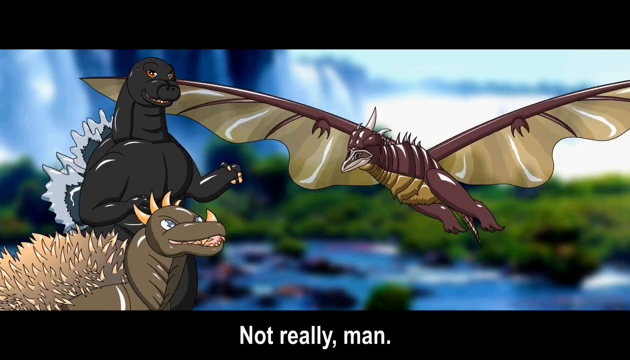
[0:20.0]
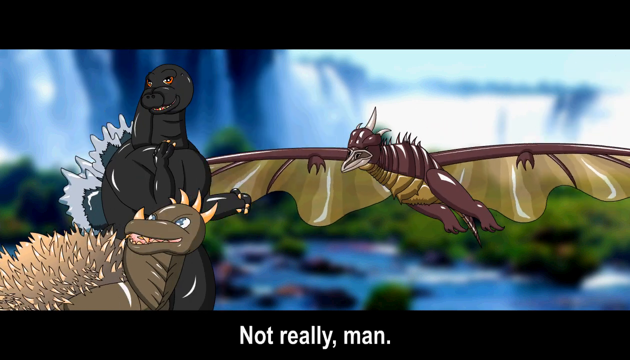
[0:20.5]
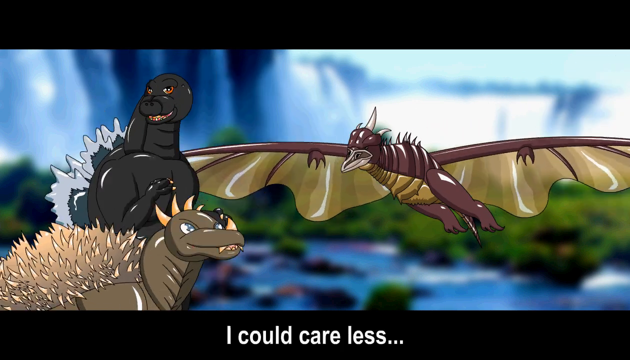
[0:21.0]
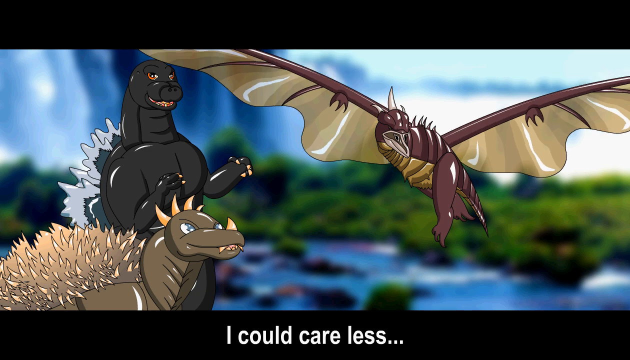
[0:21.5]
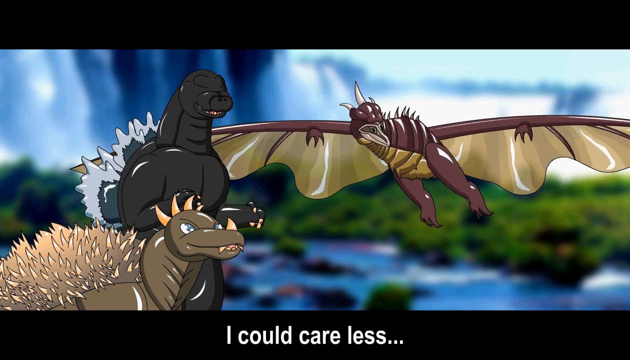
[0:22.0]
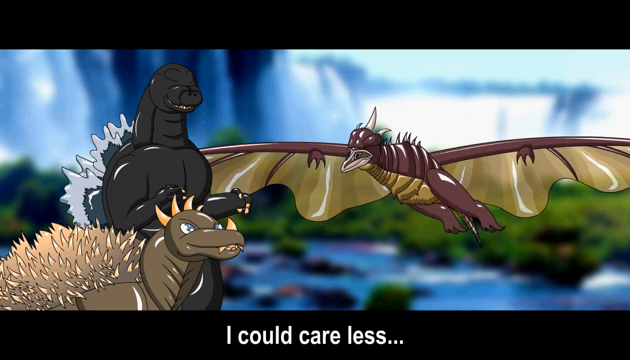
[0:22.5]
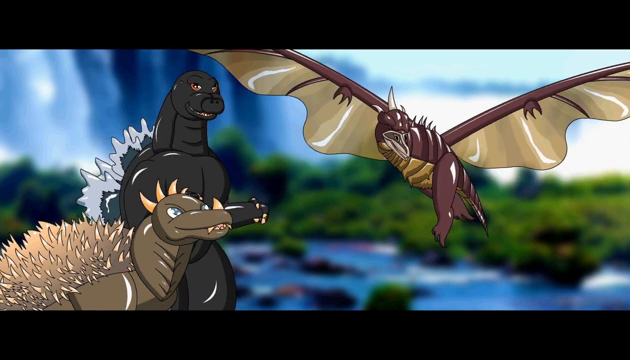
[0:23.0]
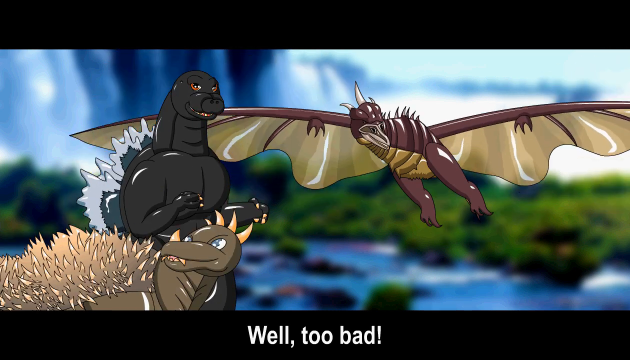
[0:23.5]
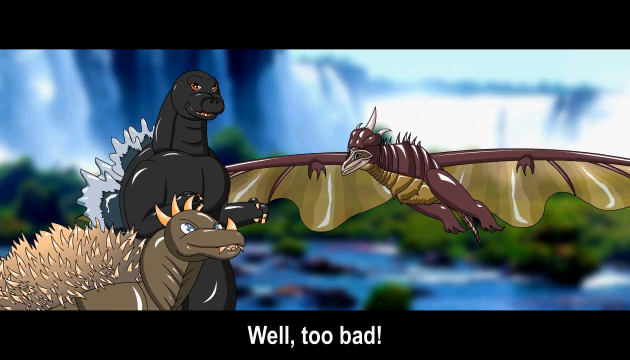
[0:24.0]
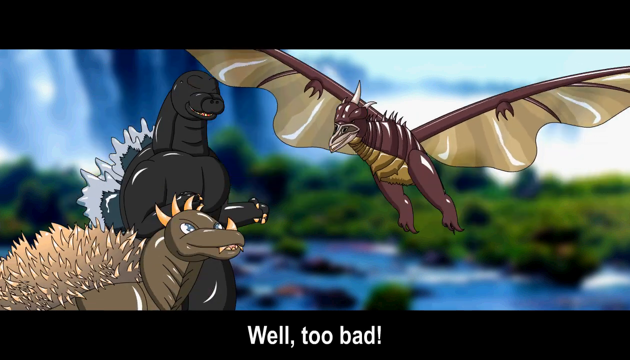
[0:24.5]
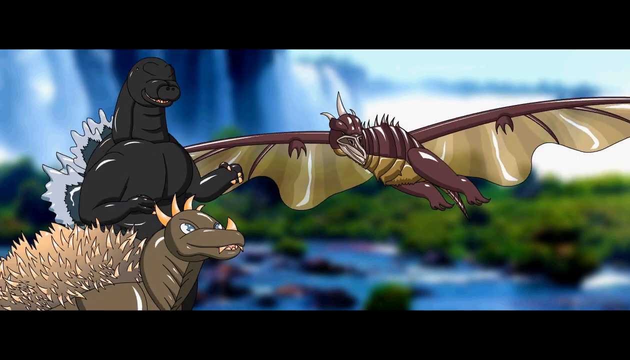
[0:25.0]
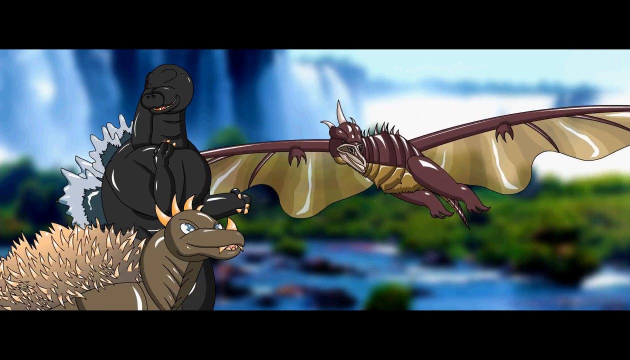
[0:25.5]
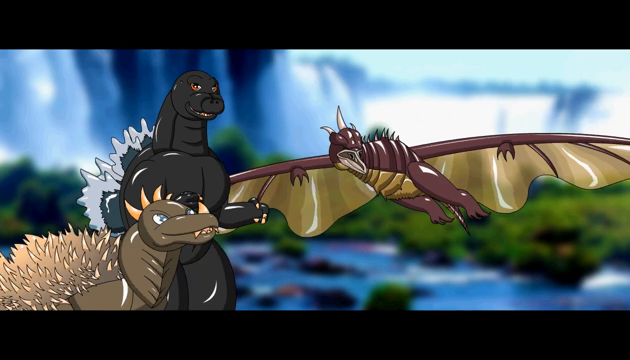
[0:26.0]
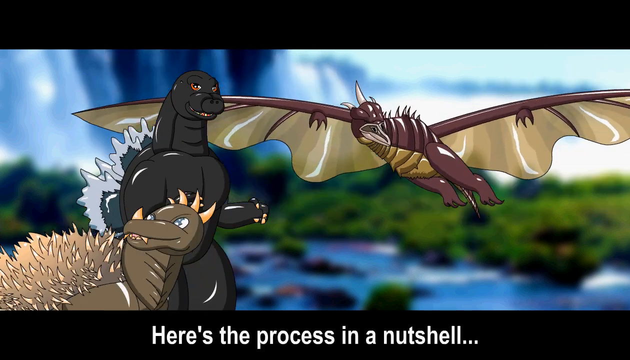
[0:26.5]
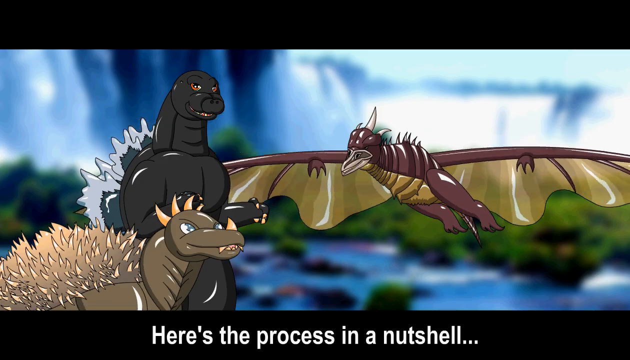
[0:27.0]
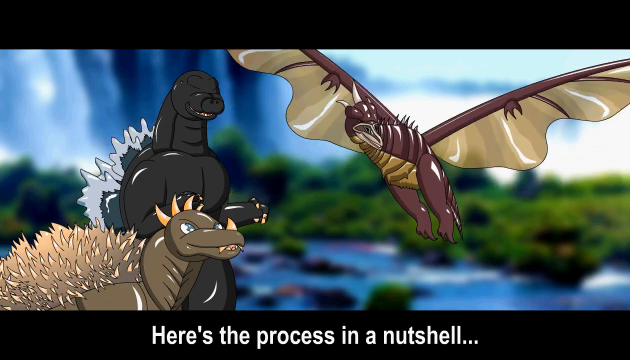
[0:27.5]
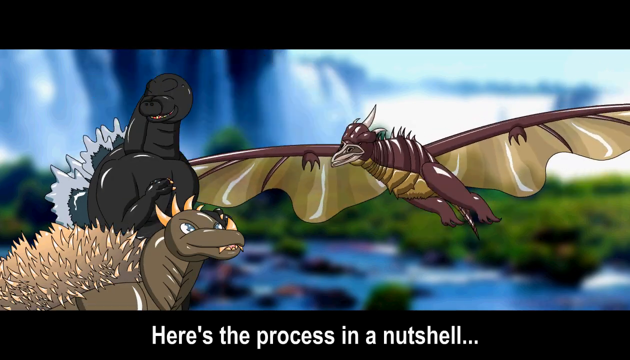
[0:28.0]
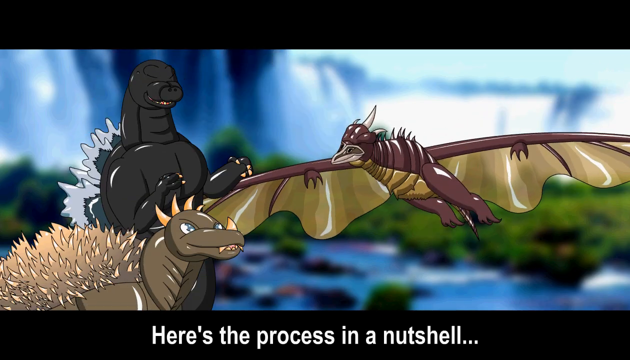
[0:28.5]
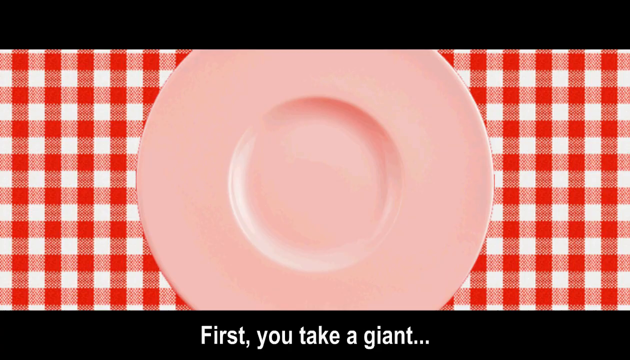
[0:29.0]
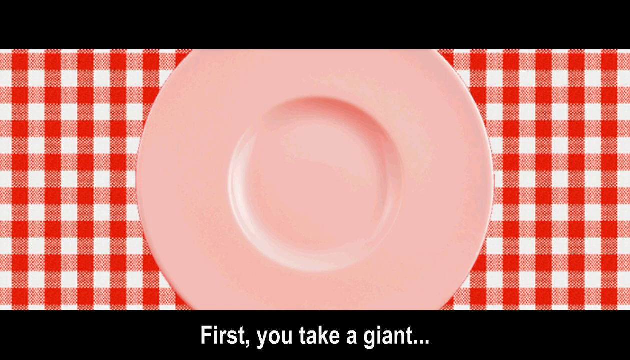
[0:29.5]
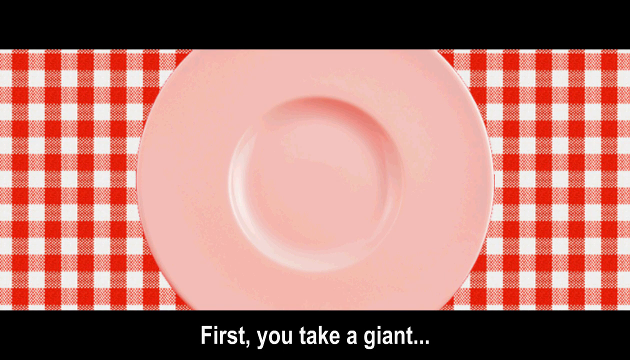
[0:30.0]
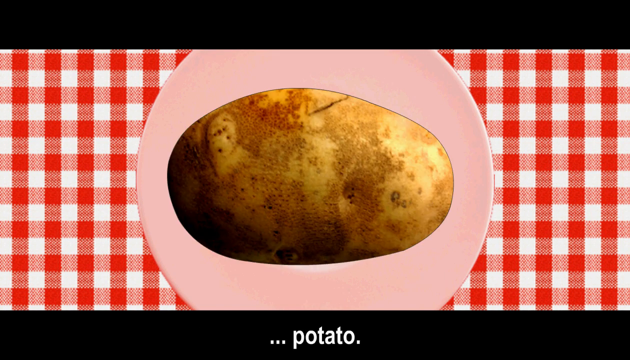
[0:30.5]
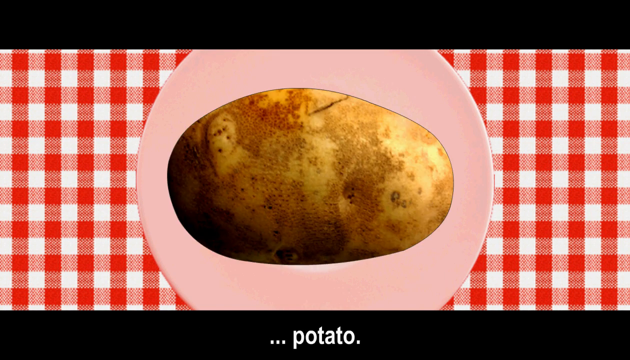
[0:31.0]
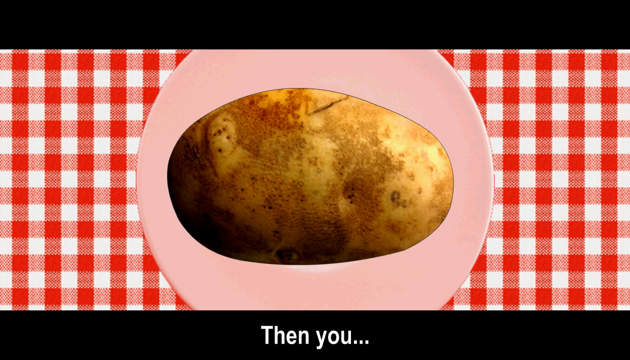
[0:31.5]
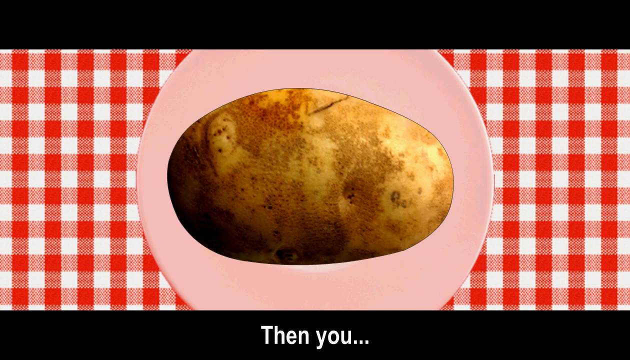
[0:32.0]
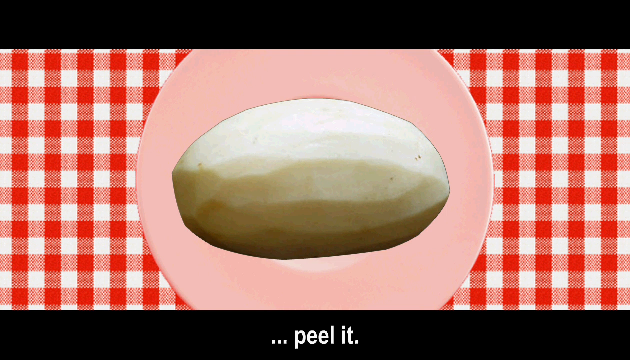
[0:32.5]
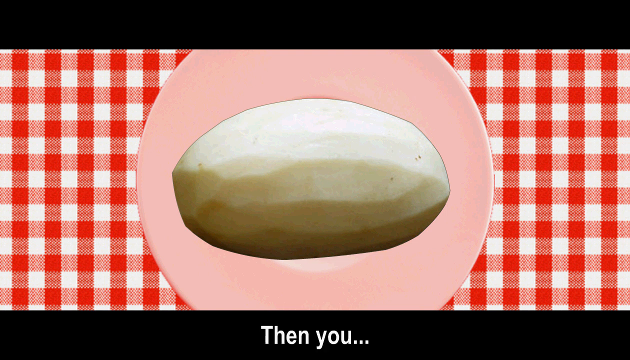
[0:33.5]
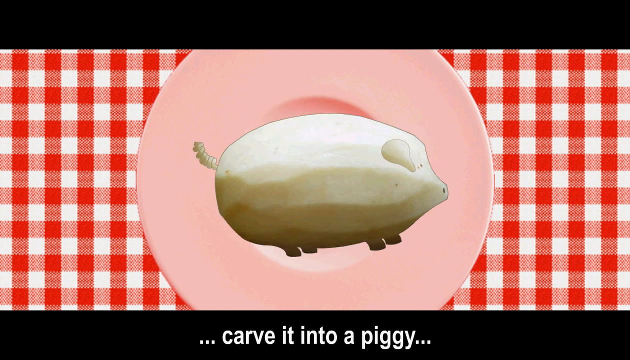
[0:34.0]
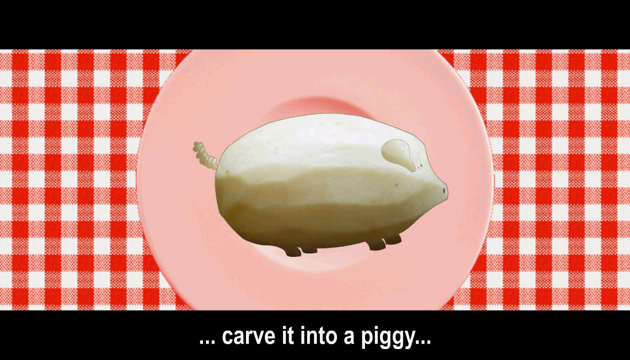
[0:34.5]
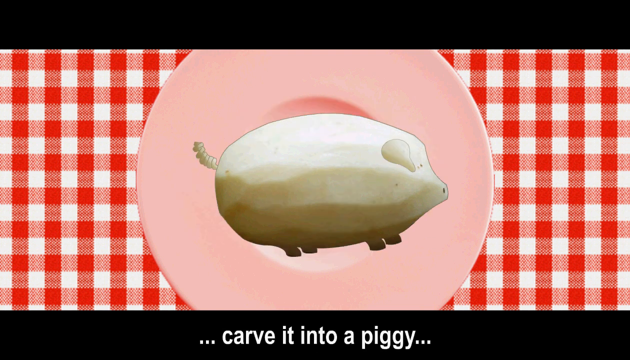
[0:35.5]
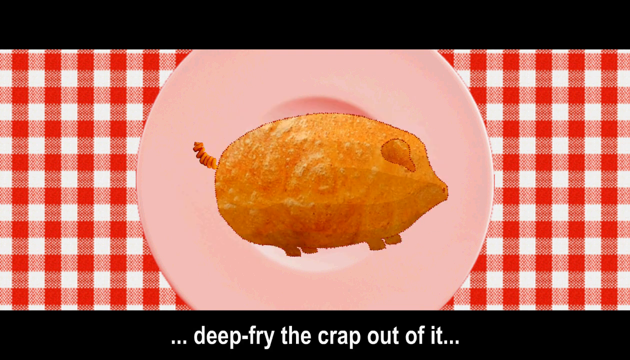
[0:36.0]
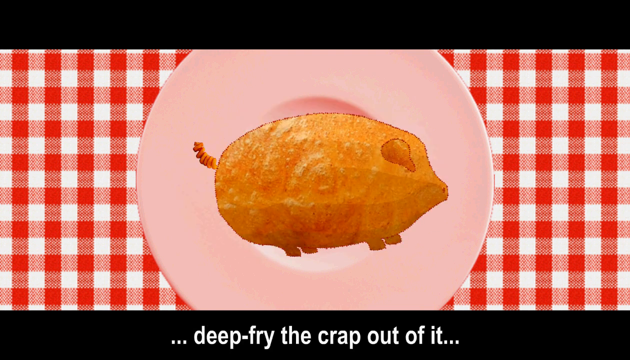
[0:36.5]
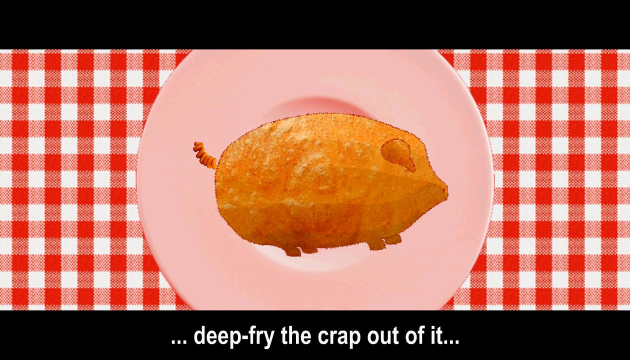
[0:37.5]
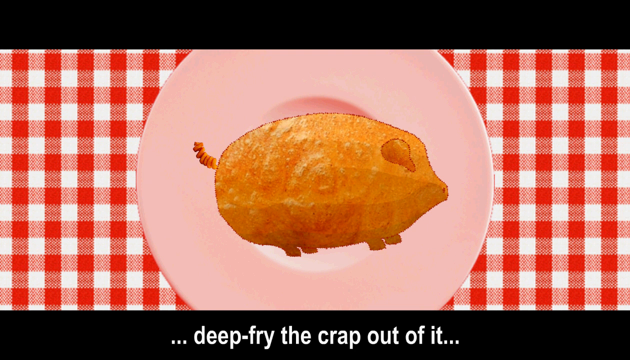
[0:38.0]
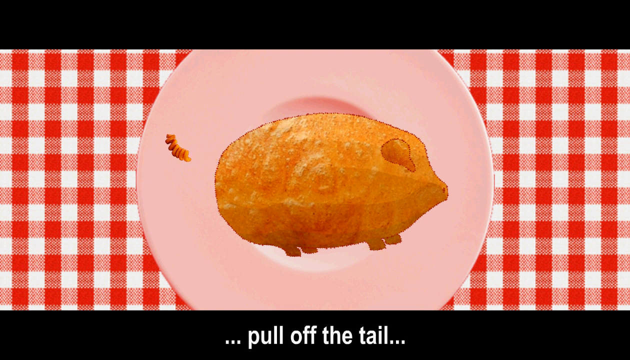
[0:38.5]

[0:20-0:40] The interaction between the three dinosaurs, clearly amateur fan art, continues. One dinosaur answers "not really man" to the question about how curly fries are made, and the other answers "I couldn't care less" or "I could care less." The flying dinosaur says "well, too bad" and then "well, here's the process in a nutshell." The scene changes to what appears to be a table with a mantel in a pattern of white and red squares. A plate is there, and then a potato shows up, which the dinosaur claims is a giant potato. The dinosaur claims the potato gets peeled, and the peeled potato is shown. It claims the potato gets carved into the shape of a piggy, and the potato is shown being carved into a piggy. It claims the potato gets deep-fried, and a deep-fried piggy potato is shown. Finally it claims that the curly fry is the tail, pulled or peeled off the deep-fried piggy-shaped potato.